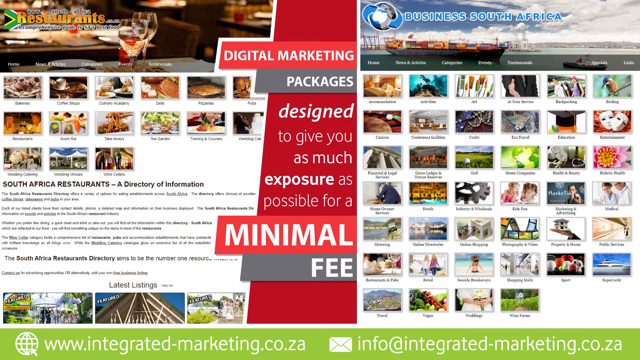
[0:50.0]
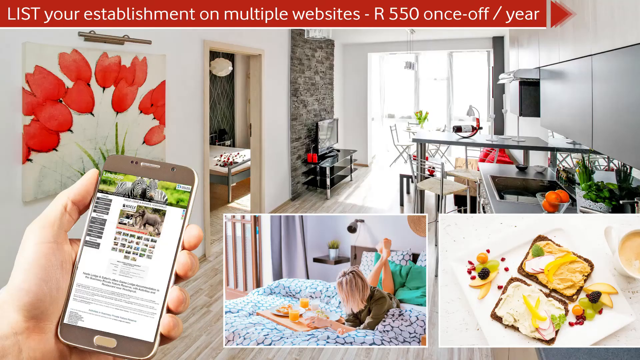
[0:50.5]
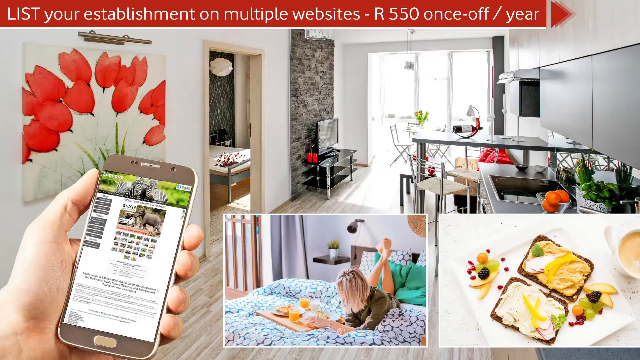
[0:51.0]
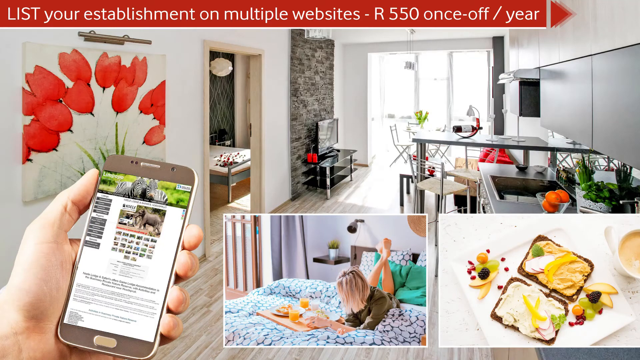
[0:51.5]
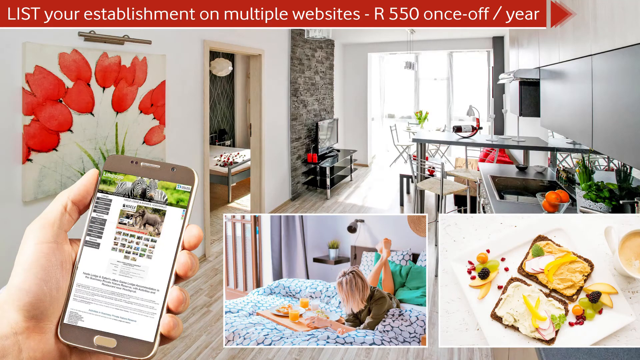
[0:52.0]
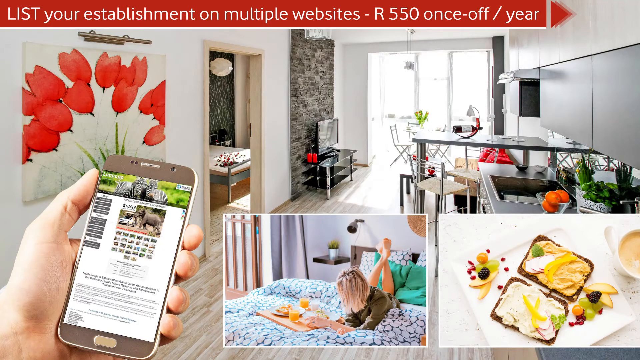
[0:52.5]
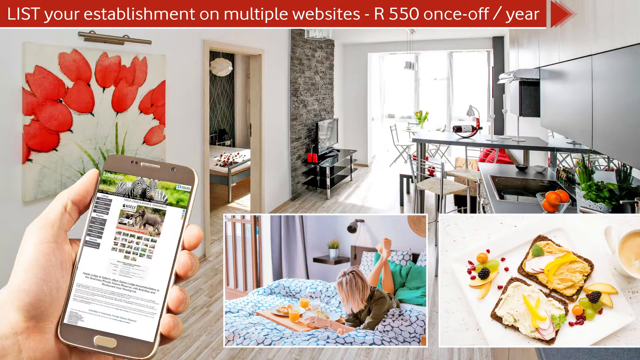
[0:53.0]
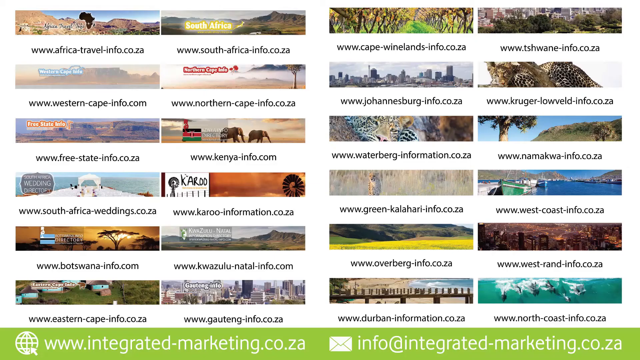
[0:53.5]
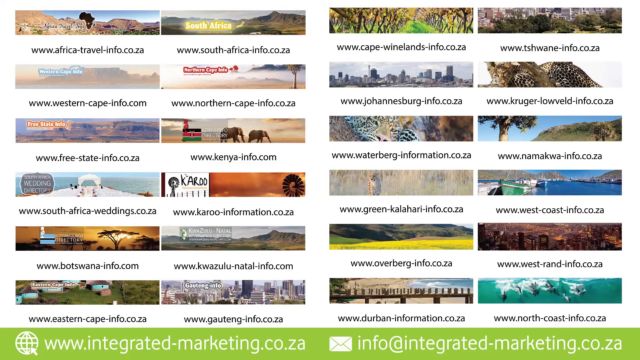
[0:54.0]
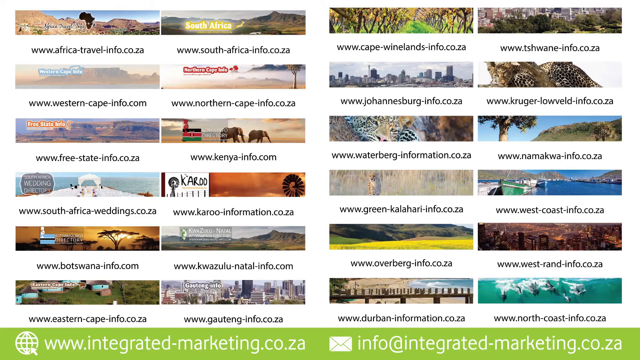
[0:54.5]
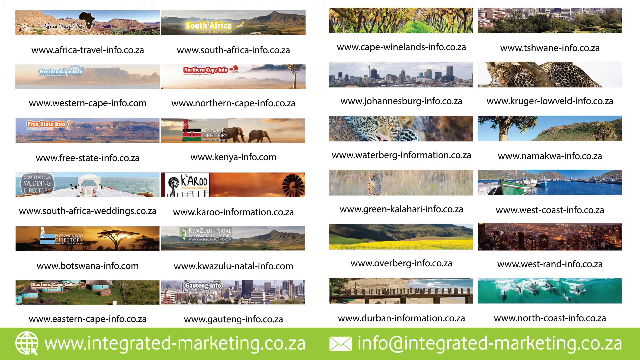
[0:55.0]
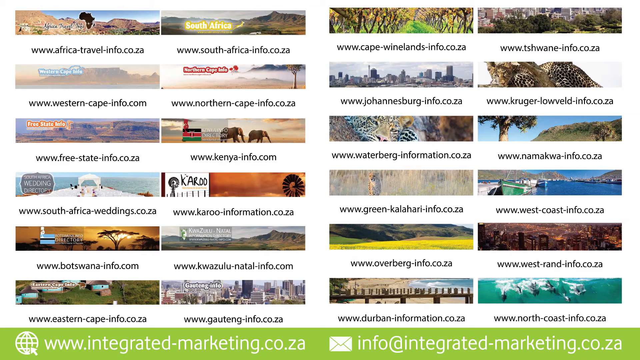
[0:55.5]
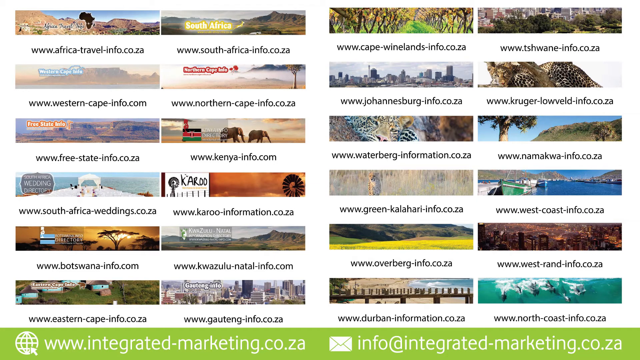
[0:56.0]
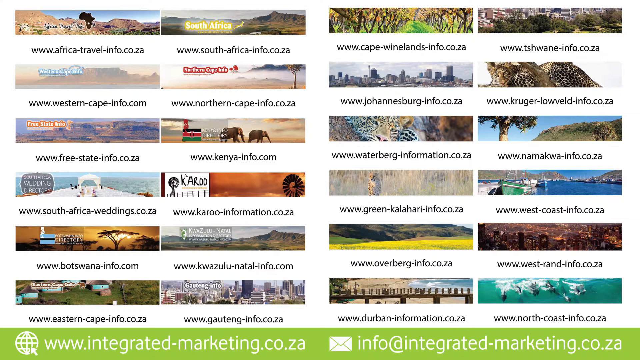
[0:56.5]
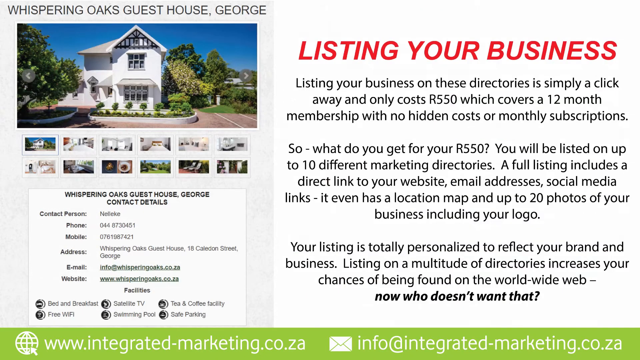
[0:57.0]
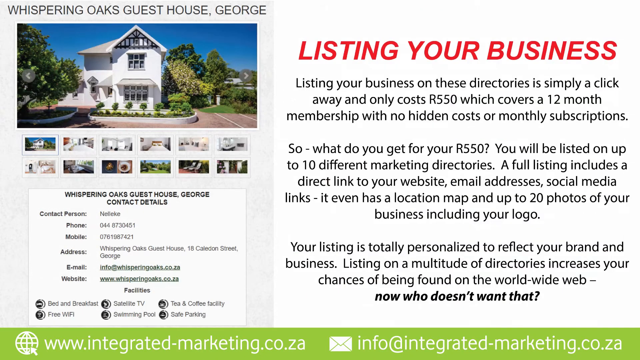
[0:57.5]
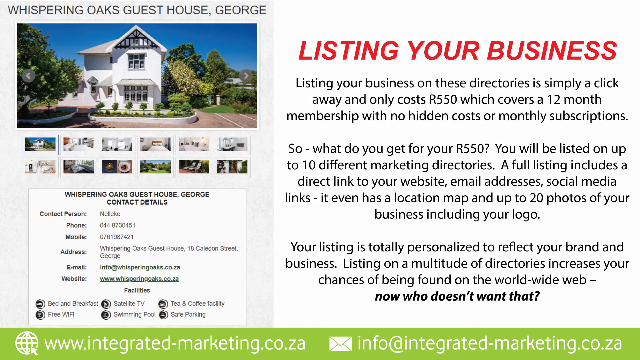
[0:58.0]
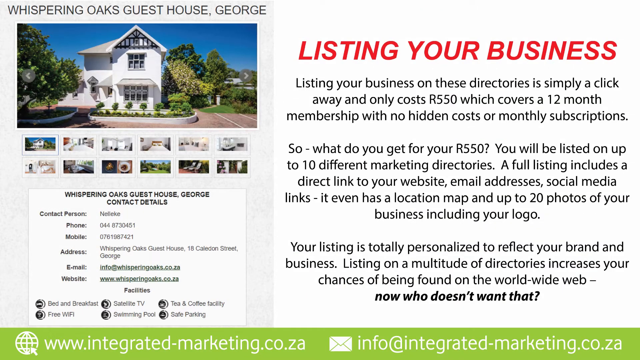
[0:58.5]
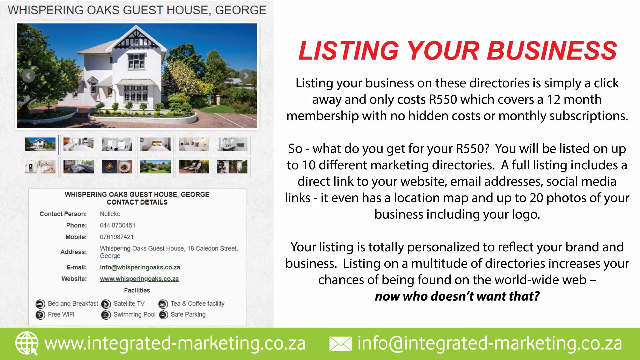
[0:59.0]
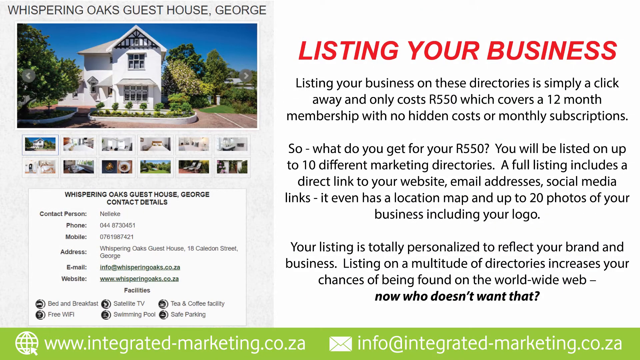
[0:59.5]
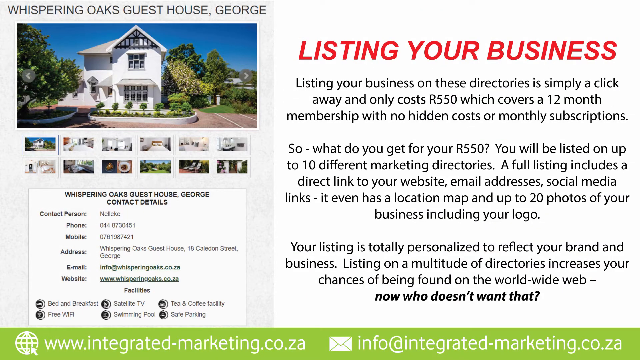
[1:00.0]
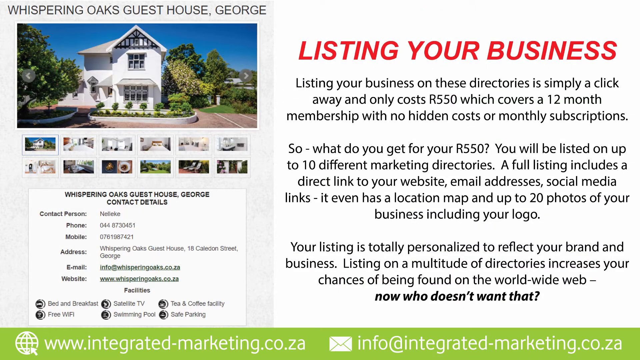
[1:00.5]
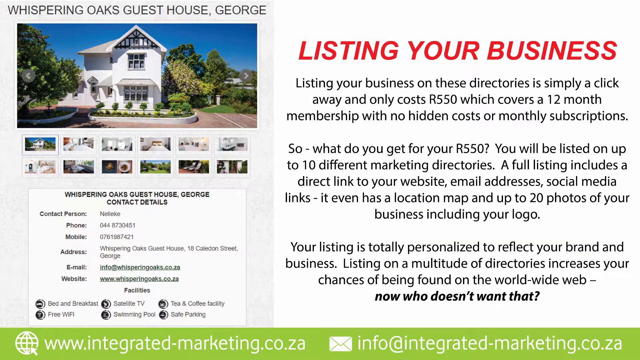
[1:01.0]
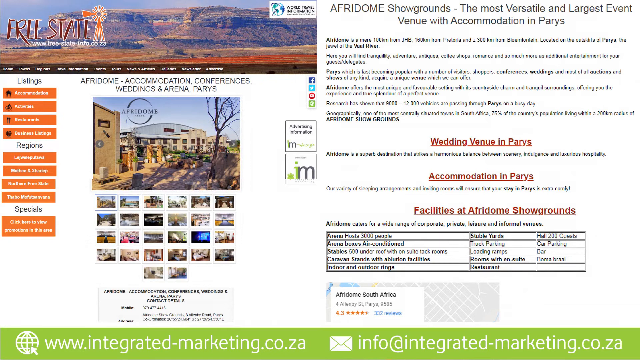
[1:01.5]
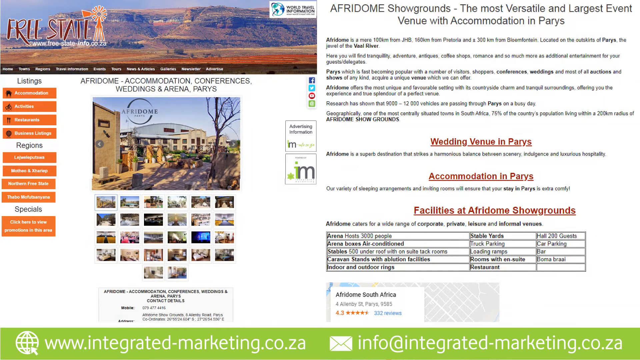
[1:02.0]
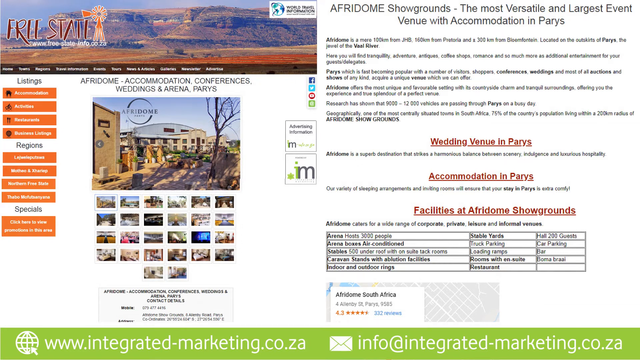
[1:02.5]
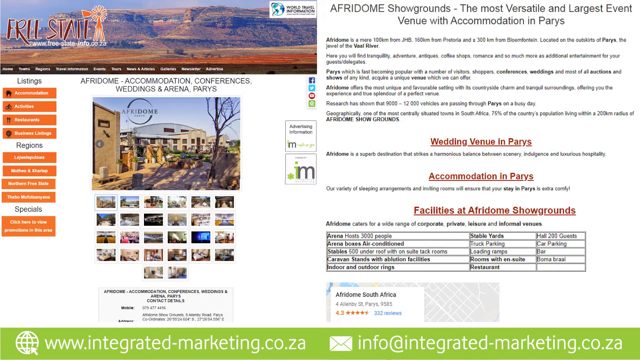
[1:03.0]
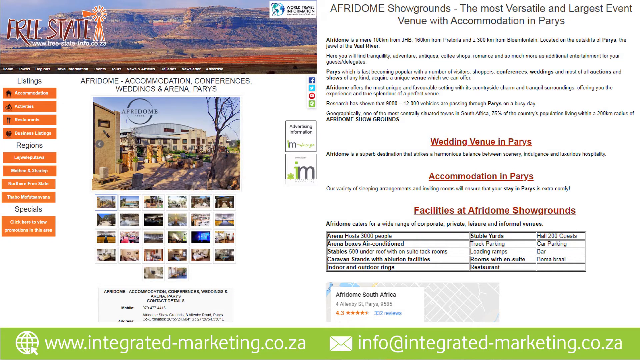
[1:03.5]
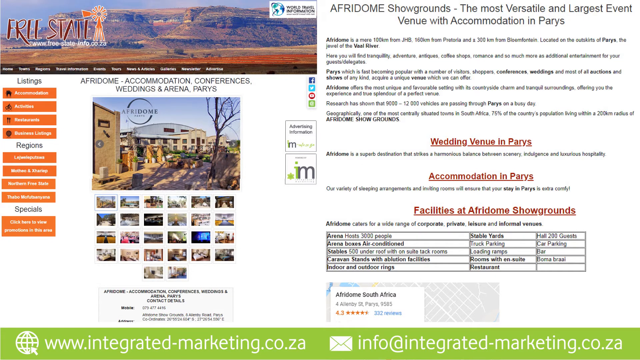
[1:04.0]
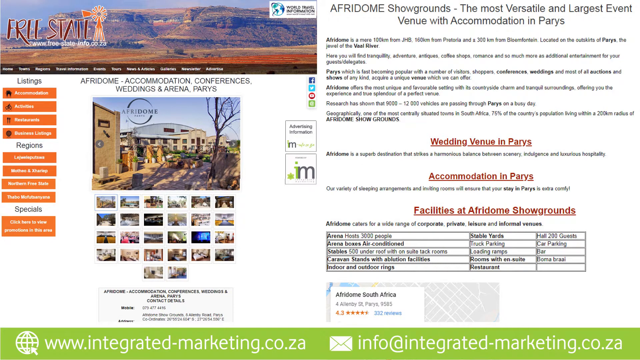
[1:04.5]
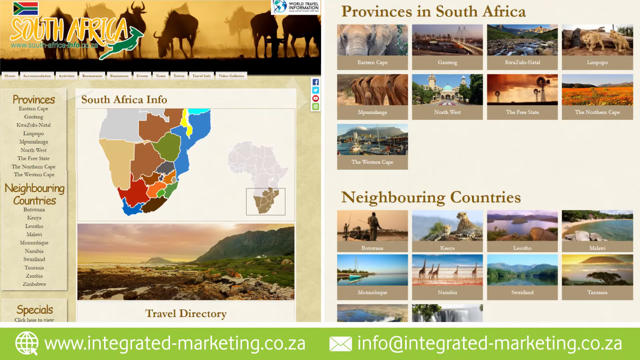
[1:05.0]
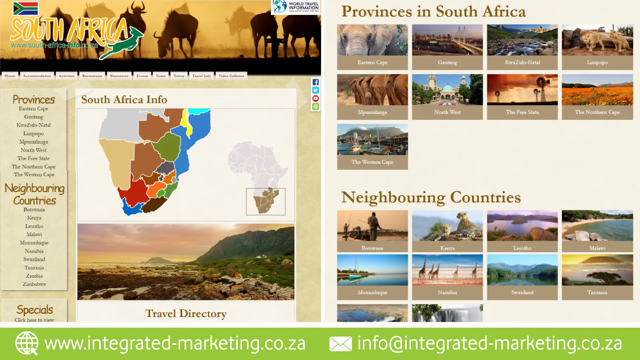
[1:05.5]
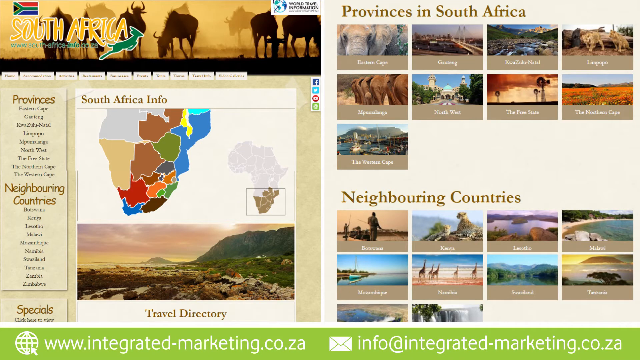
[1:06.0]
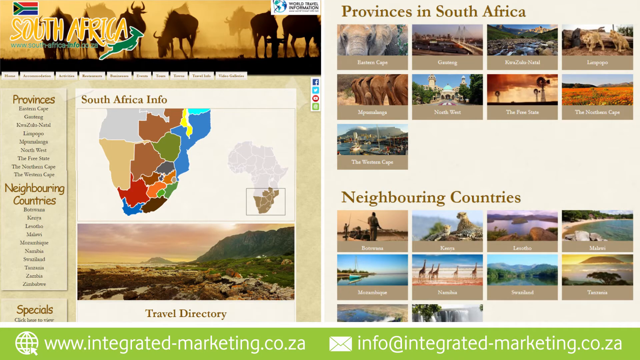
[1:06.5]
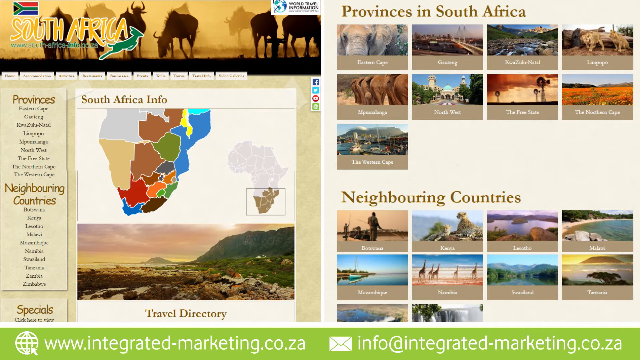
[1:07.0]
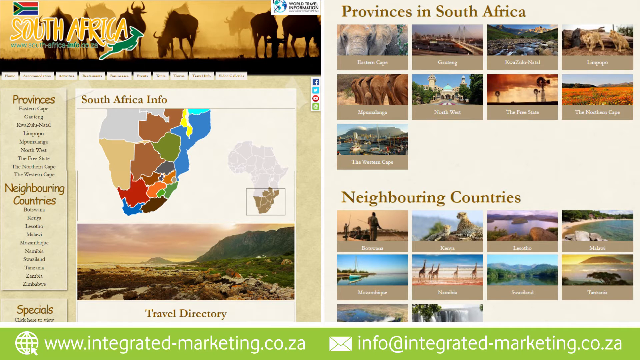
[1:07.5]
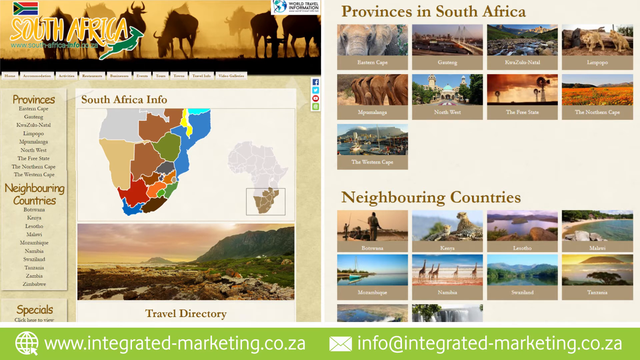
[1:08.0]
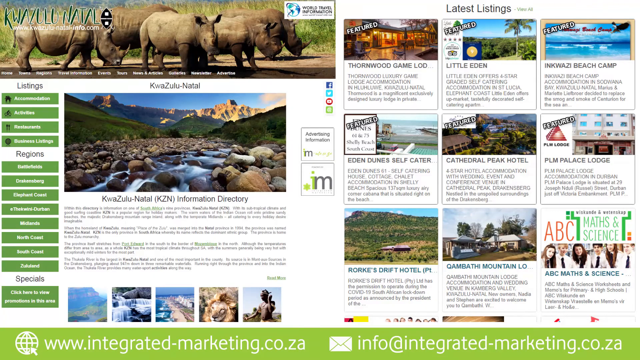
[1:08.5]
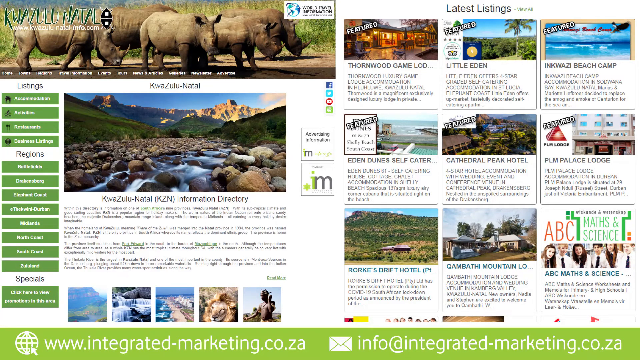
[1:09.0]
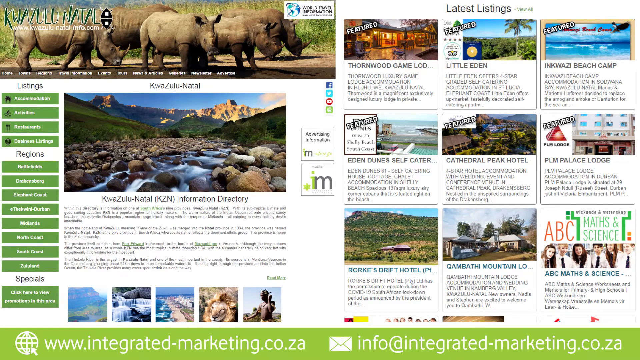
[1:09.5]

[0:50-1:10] Another graphic's main photo shows a hand using a phone, with an apartment or hotel in the background. Smaller images overlay it: one of someone having breakfast in bed while lying on their stomach, and another of food that looks like some sort of breakfast with fruits on it. In the apartment there is a big white painting with red tulips, a small TV in front of a gray brick wall, a small dining table, and a glimpse through an open door of a bedroom with a silver skinny frame and a white mattress. A banner at the top reads "list your establishment on multiple websites 550 once off per year". The next shot is a screenshot of different websites and their banners arranged in four columns and six rows. Another graphic says "listing your business" on the right, with details about how to list a business and what is included; on the left it shows an example listing for a Whispering Oaks guest house with contact persons, contact details, facilities, and some photos. Next is an example website called Free State, with the website on the left and its details on the right, including offerings, accommodation, and facilities. Then South Africa appears, with its website on the left and provinces and neighboring countries on the right, illustrated with photos. KwaZulu-Natal follows, with its website on the left and its latest listings on the right.